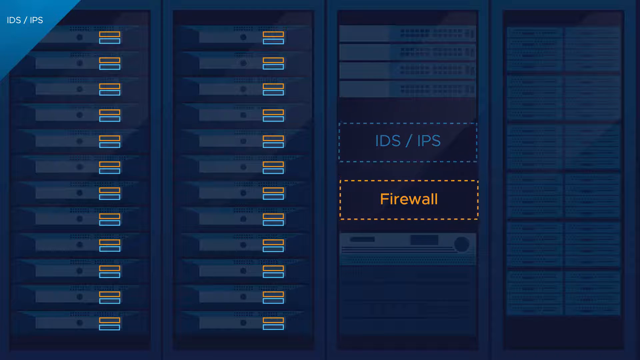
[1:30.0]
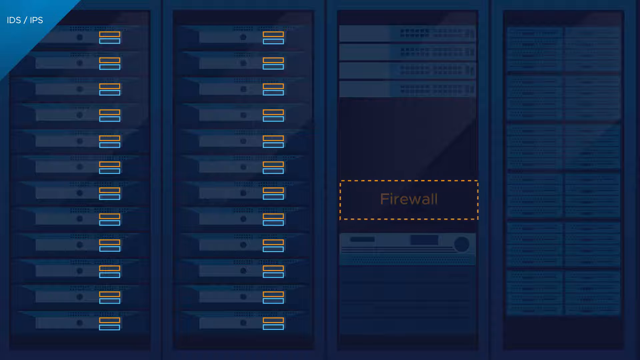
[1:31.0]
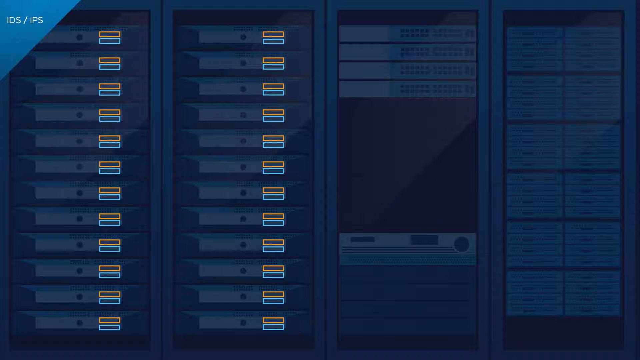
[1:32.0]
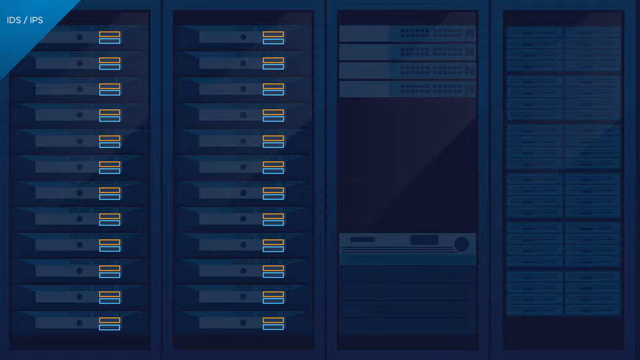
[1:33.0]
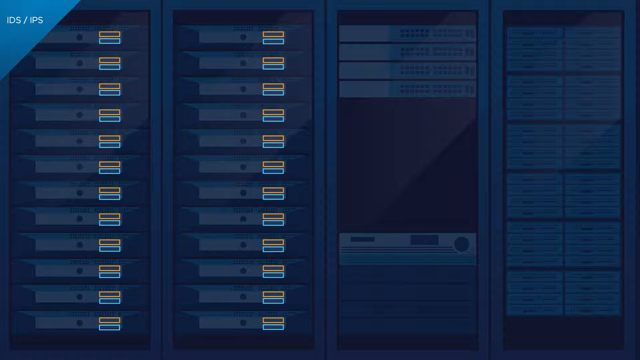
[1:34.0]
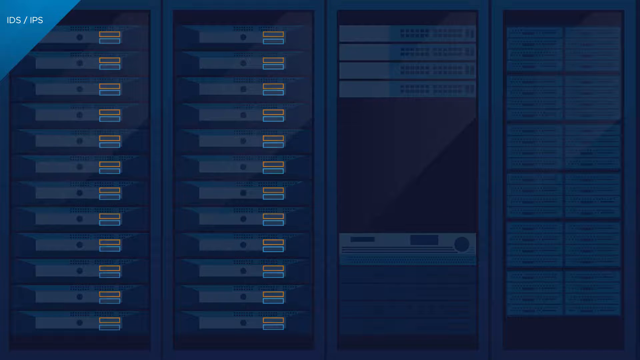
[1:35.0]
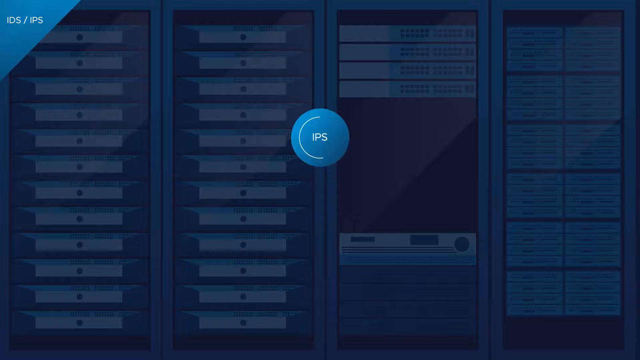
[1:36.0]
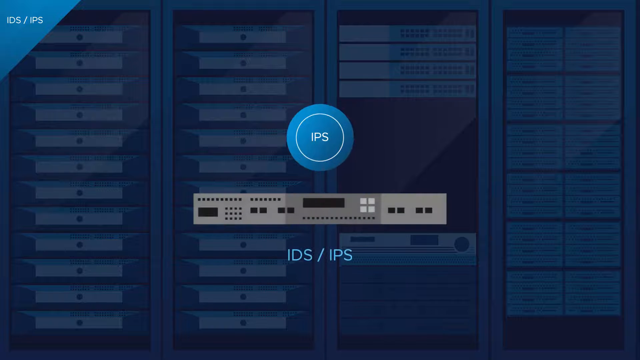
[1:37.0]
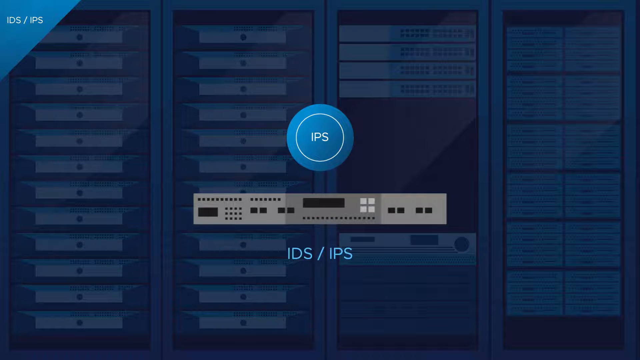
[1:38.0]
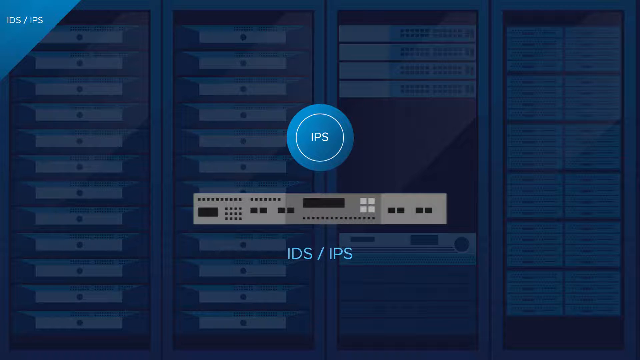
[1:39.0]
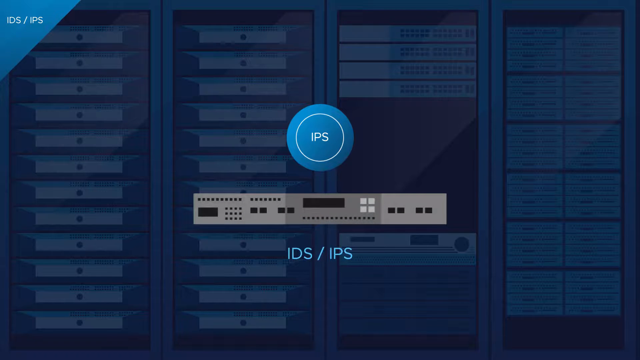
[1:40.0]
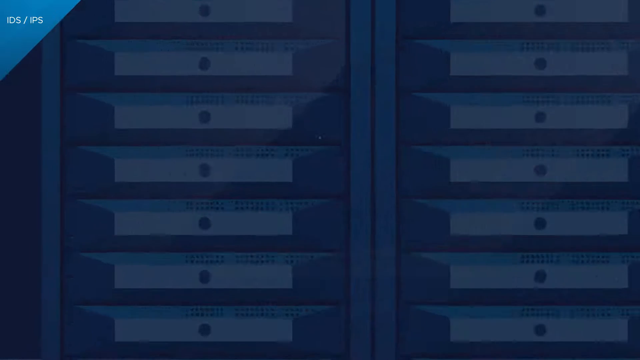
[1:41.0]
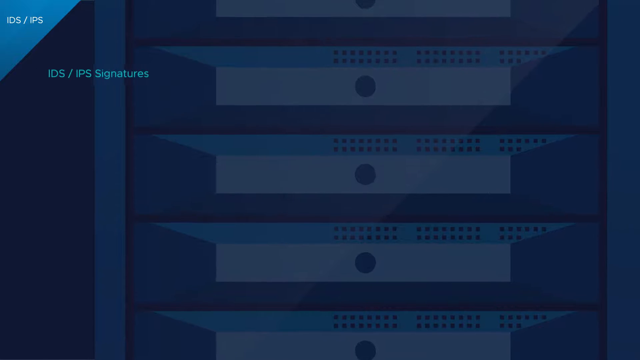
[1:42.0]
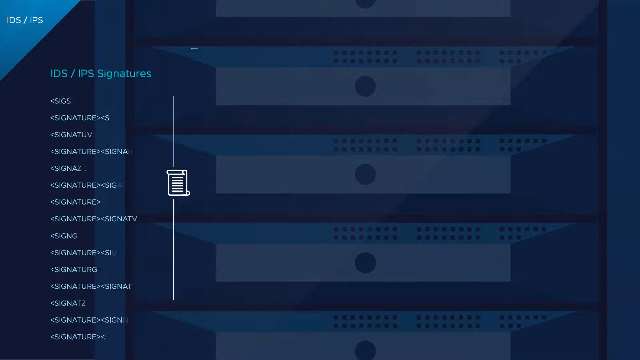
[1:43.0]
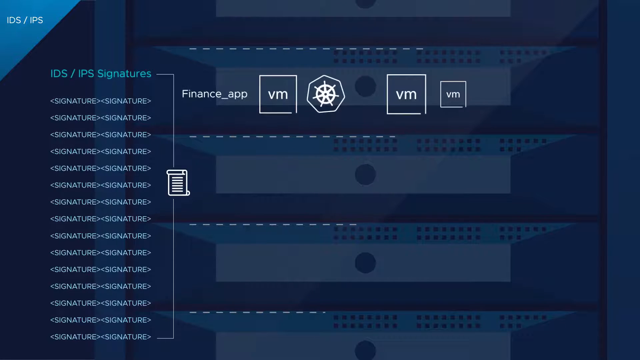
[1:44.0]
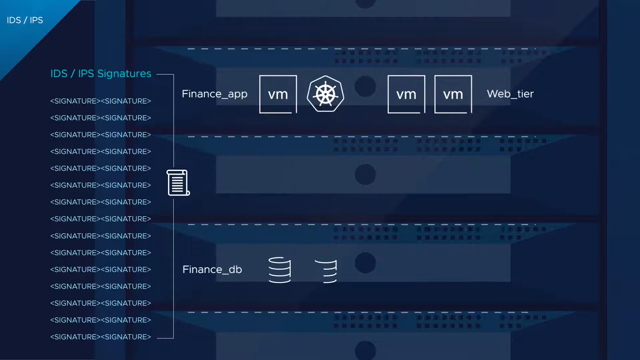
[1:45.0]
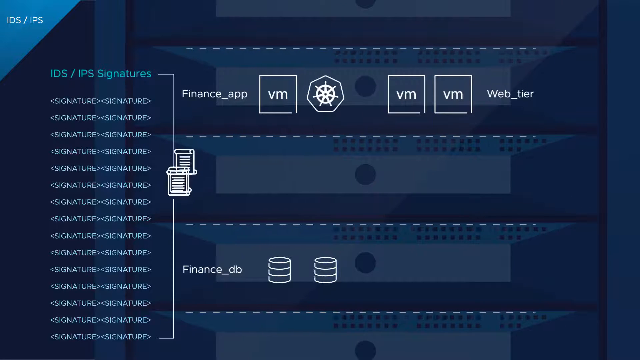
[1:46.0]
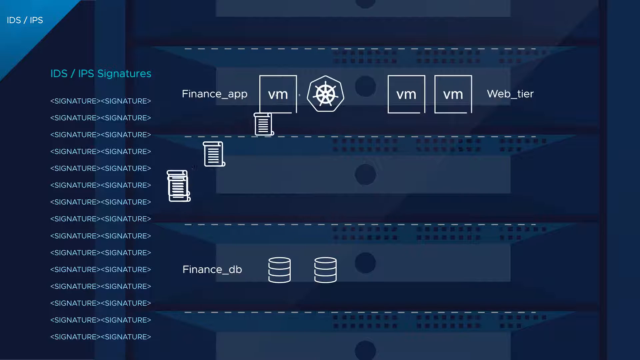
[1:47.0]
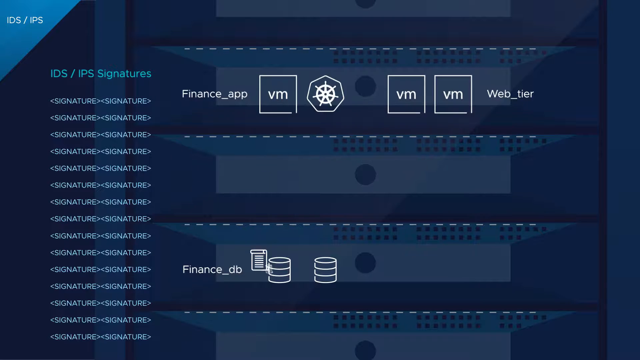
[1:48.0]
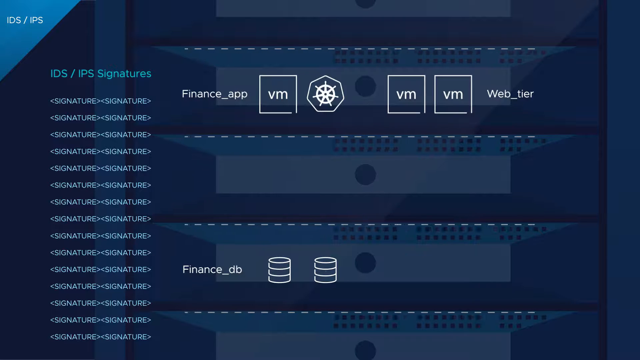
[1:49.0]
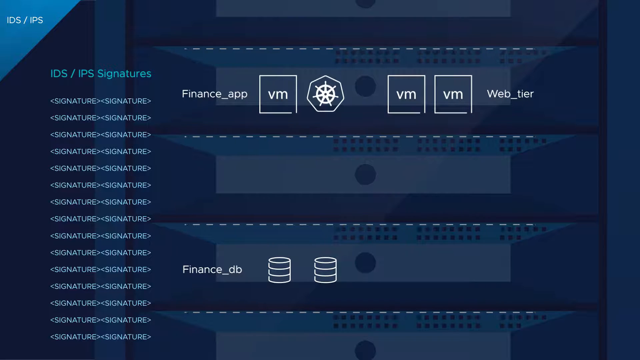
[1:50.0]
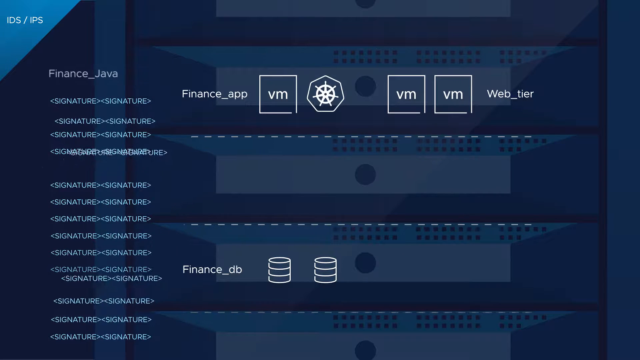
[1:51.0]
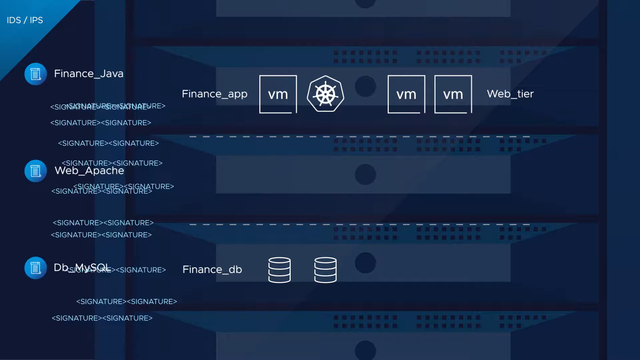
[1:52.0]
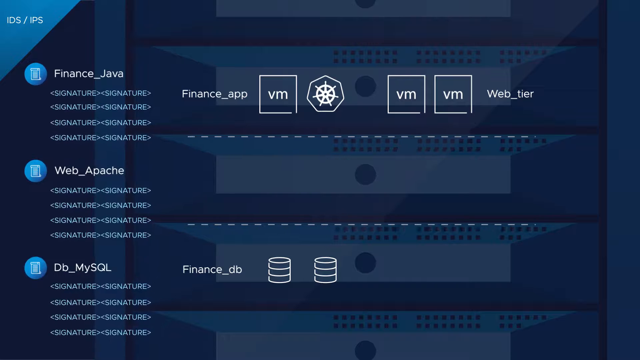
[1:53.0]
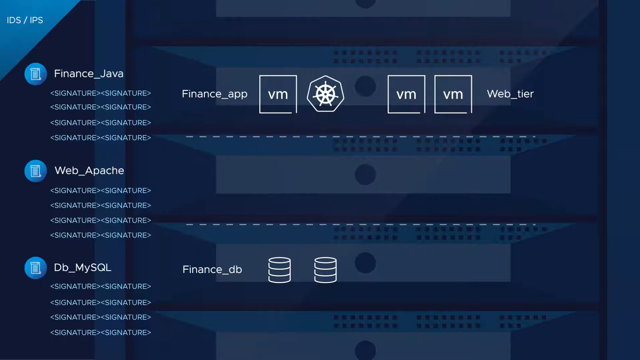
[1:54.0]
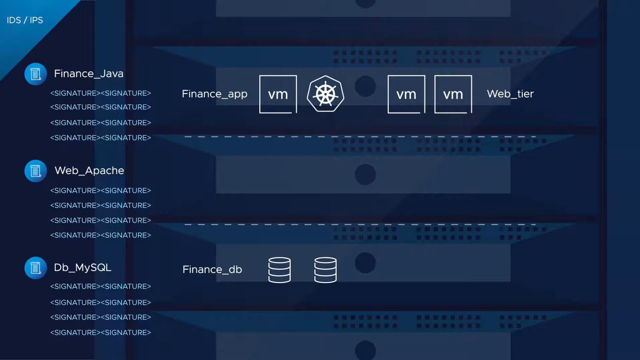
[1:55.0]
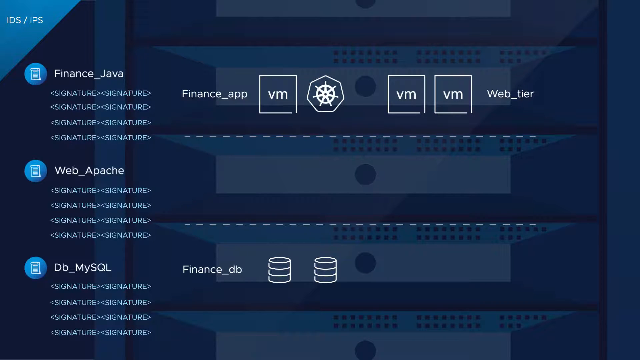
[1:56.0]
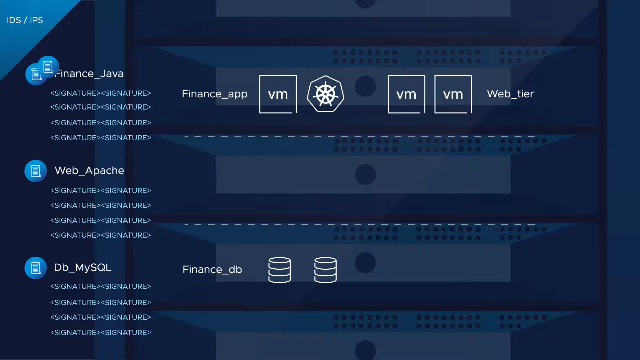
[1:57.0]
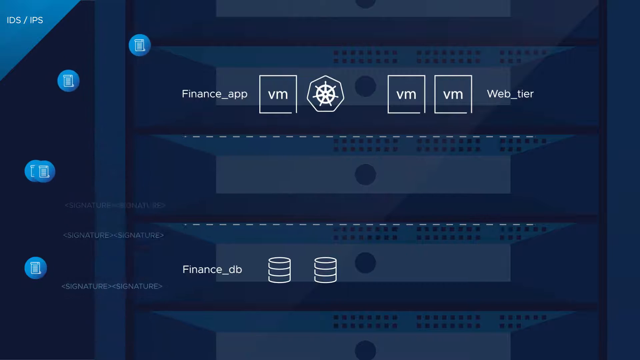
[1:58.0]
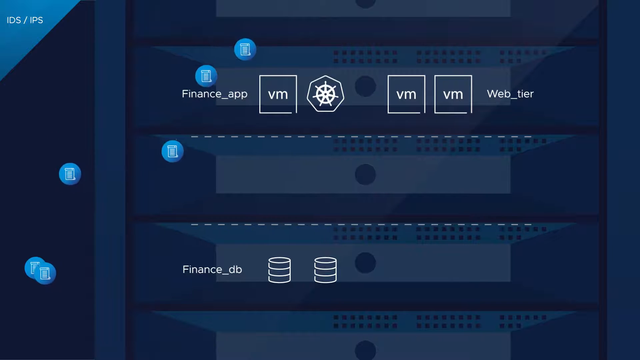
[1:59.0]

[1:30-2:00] The firewall and IPS server racks have disappeared, and white text in the upper left still reads "ids ips" with a blue triangle. An IPS port pops up in the center with a circle labeled "ips ids" at the bottom. The view zooms in on three server racks on the far left, and white text reads "ids ips signatures", followed by "signature signature" repeated on about 14 or 15 lines. More toward the center, text reads "finance_app" and "VM", with something like a pirate ship's steering wheel on it and "VM VM" next to it. Many documents pop up and rise, and then "finance_dp" appears with coins stacked on top of each other. On the right side, where the signature text is, there are labels including "finance java web" and "dp_my sql".